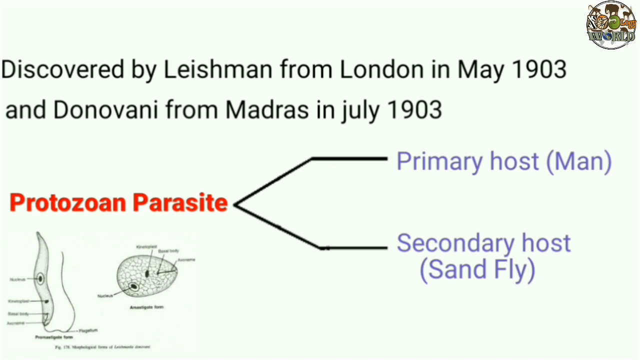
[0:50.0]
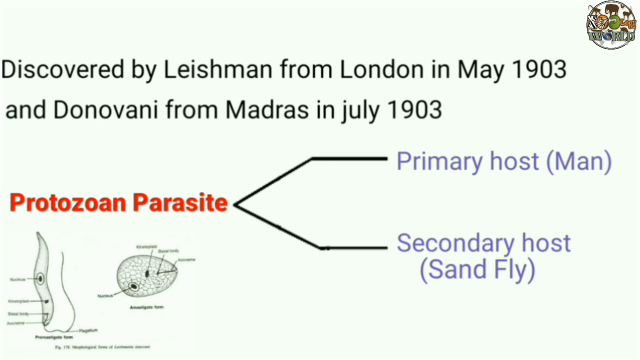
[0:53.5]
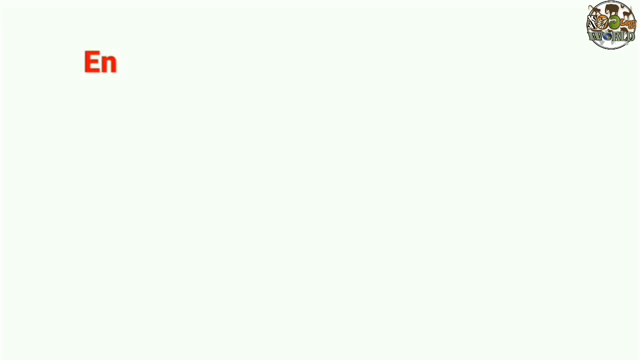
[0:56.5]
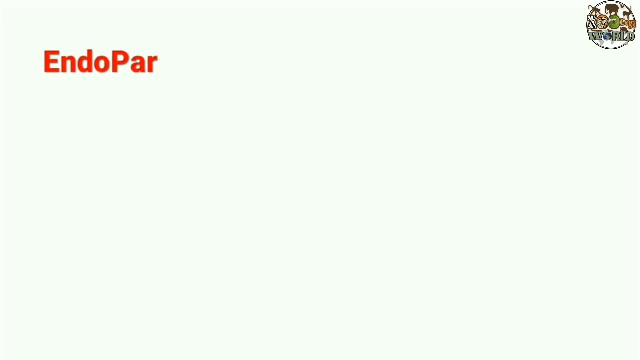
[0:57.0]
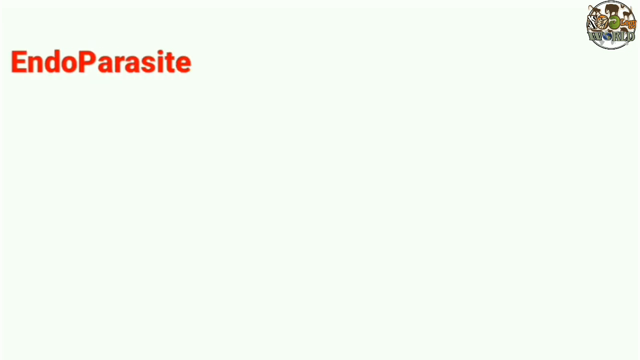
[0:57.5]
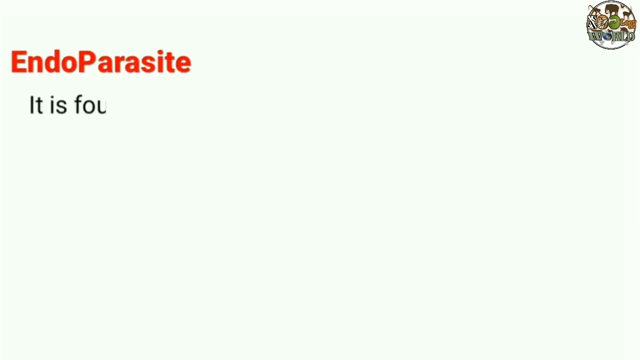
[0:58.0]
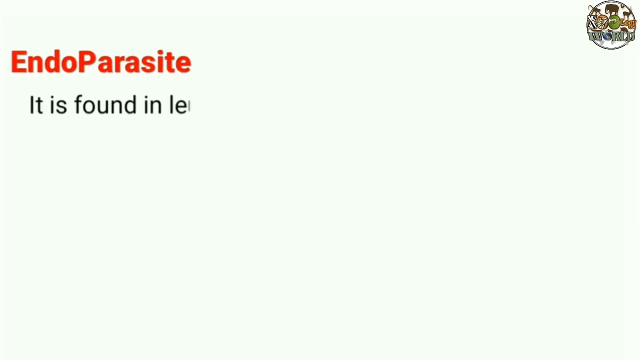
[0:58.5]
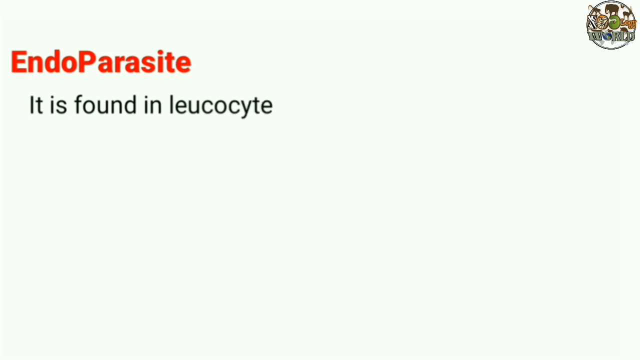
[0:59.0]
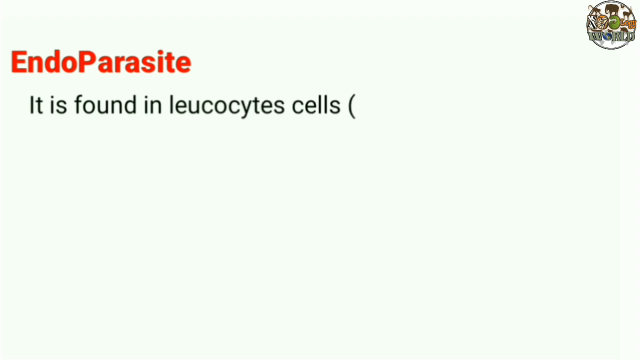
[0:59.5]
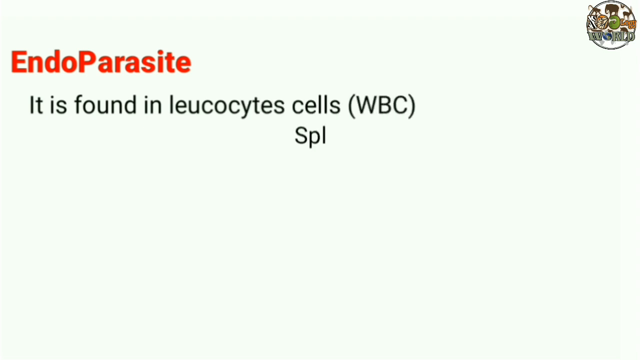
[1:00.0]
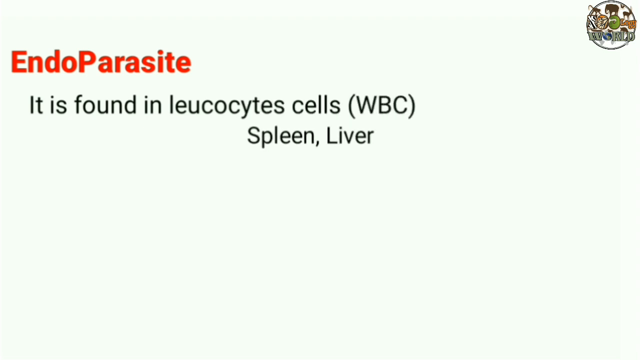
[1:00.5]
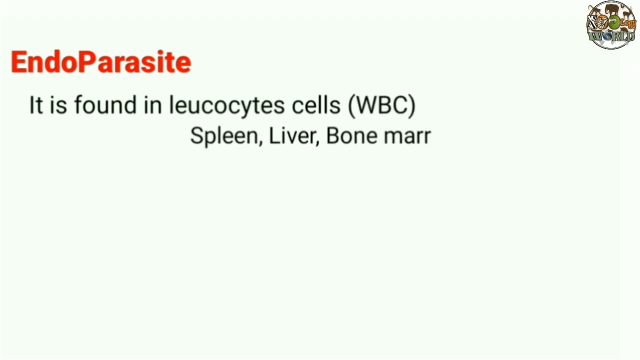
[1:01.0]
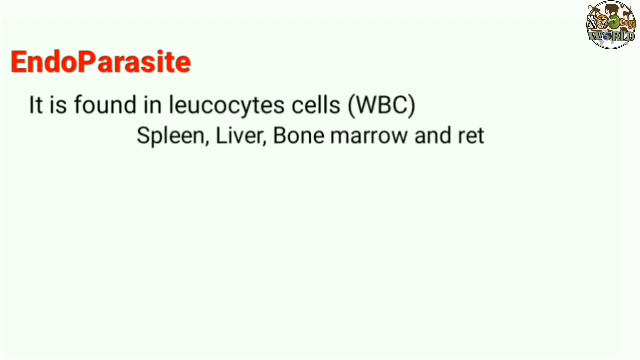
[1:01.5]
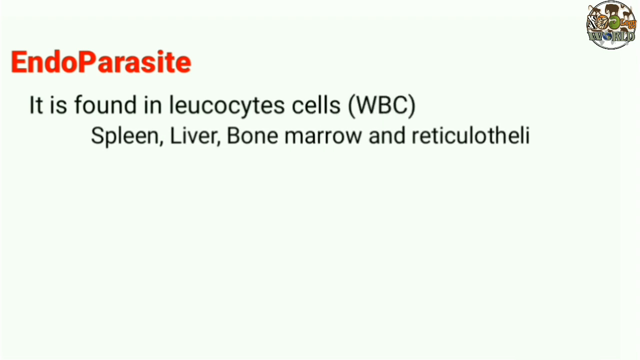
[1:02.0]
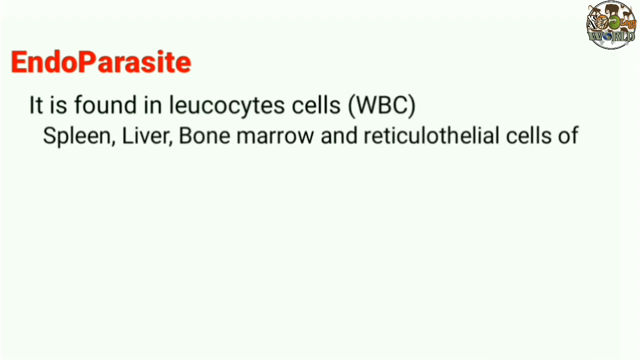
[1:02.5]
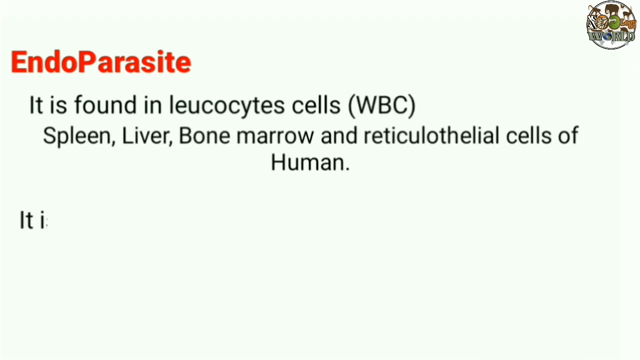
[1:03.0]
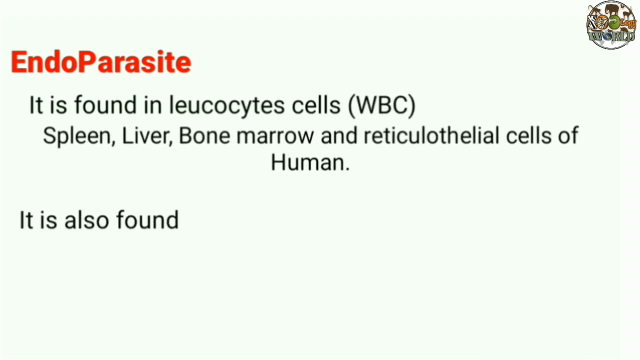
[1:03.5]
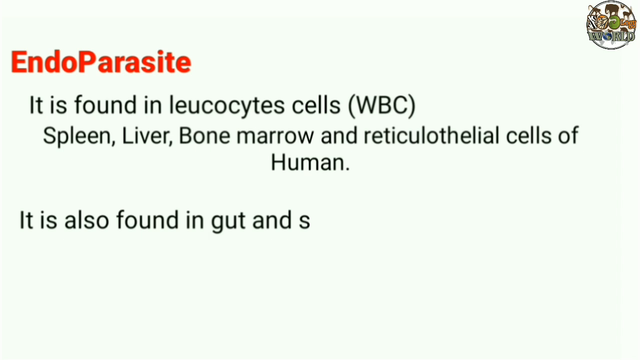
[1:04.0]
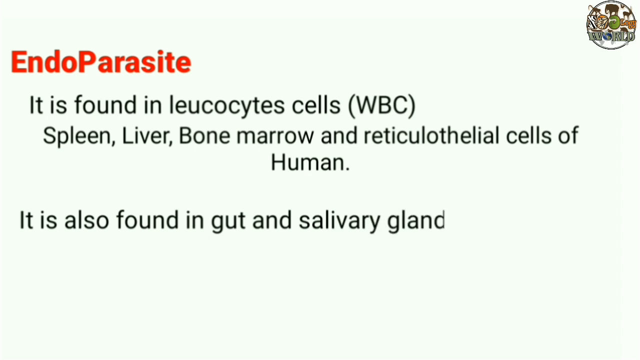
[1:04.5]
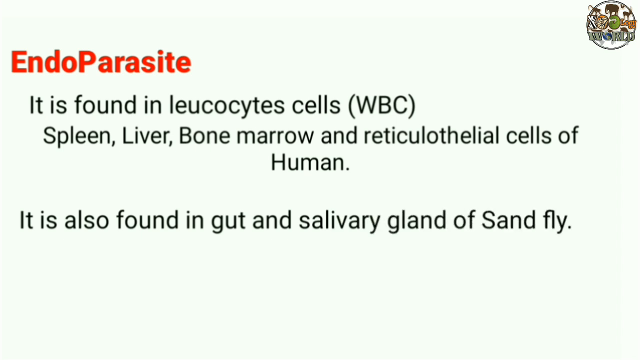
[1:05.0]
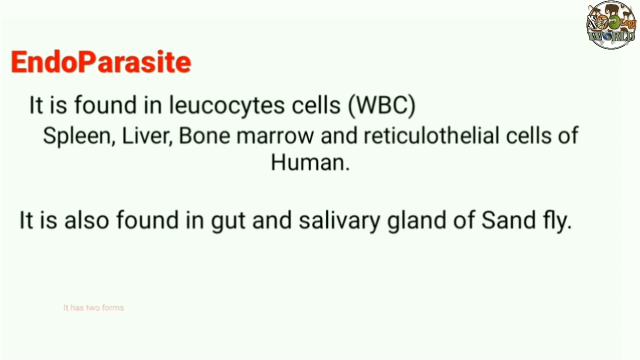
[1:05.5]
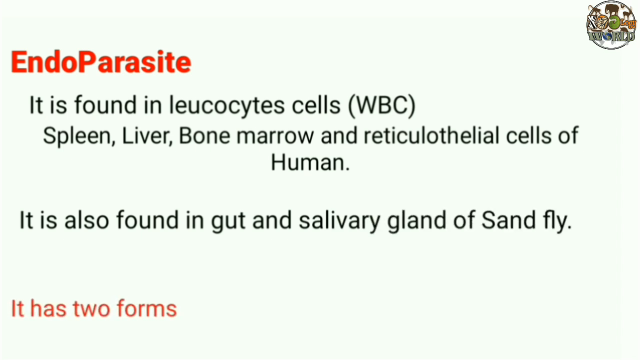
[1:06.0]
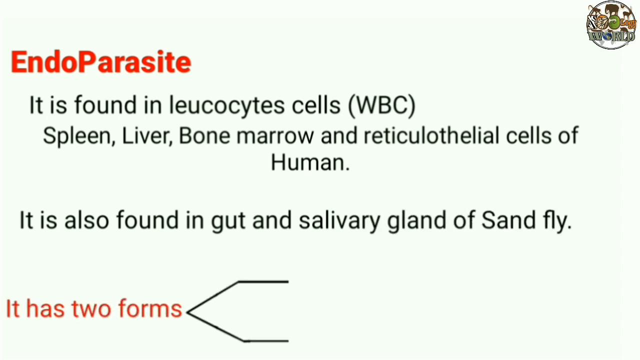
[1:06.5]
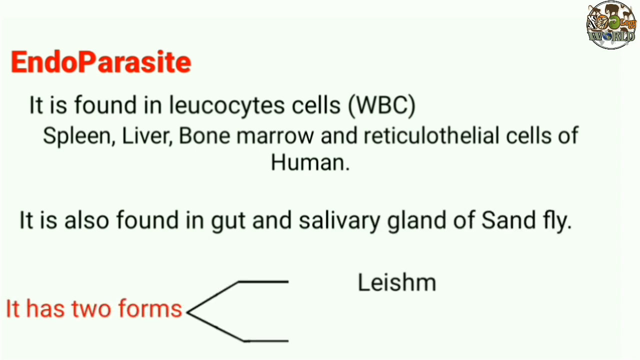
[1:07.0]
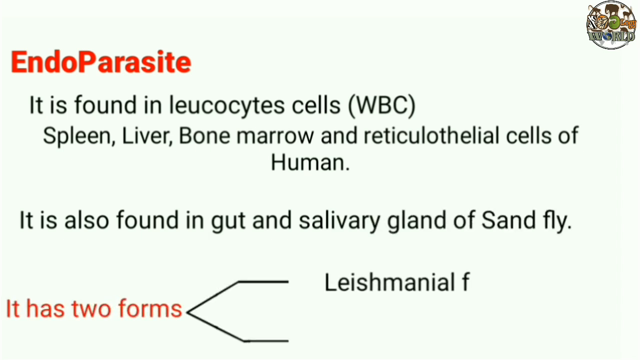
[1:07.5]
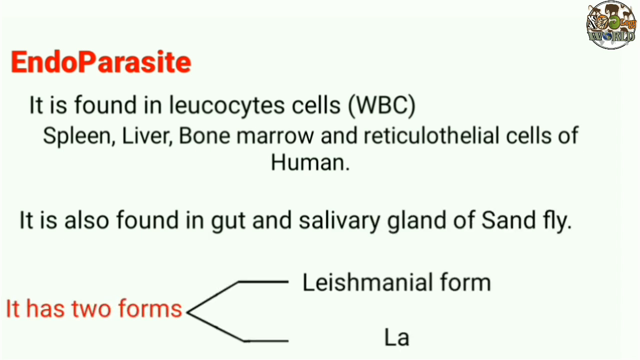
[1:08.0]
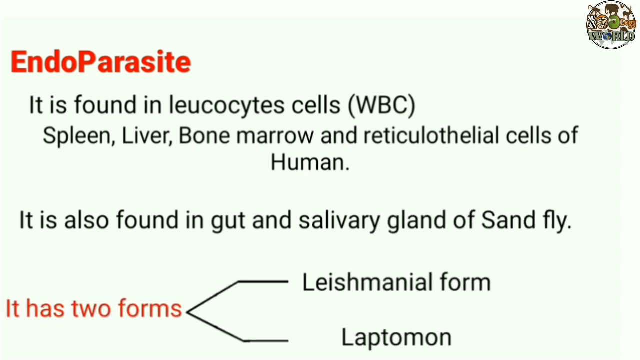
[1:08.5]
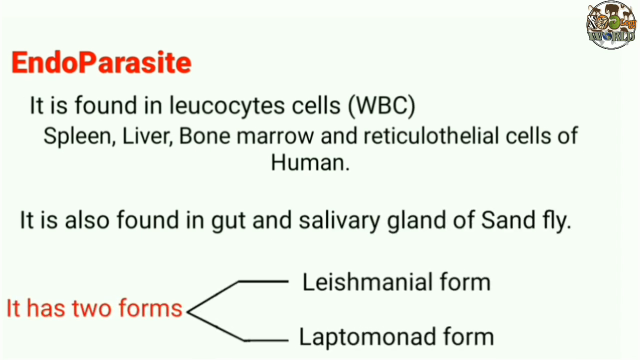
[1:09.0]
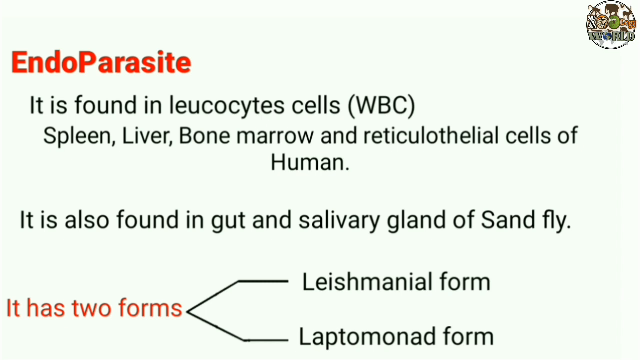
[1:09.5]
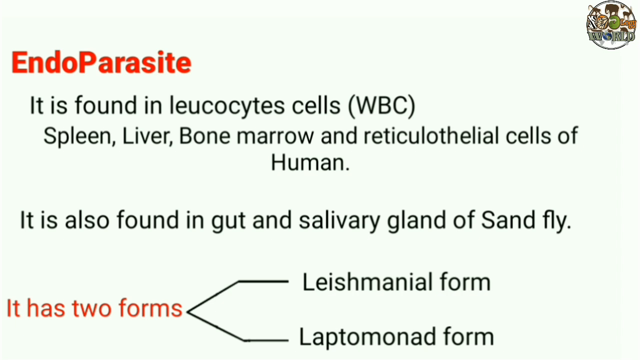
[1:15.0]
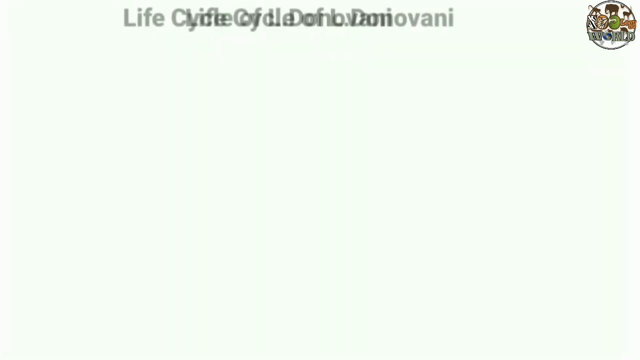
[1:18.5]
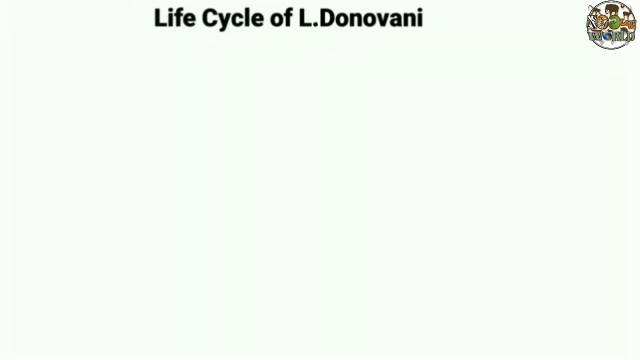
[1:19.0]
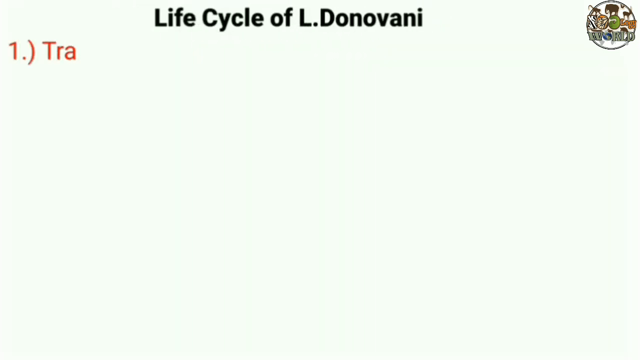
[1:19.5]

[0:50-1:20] On a white background with a logo in the top right, text describes when the protozoan parasite was found, both in the year 1903. At the bottom right it says the primary host is human and the secondary host is sandfly. The scene changes, and at the top the word "endoparasite" appears in orange. The text describes where it is found: in the leucocytes cells WBC, such as the spleen, liver, bone marrow, and the reticulothelial cells of humans, and also in the gut and salivary gland of a sand fly. It describes two forms, the Leishmanial form and the laptomanad form. The scene then begins to transition to a new background, and as it does, the top reads "the life cycle of the L Donovani." The logo remains visible in the top right.